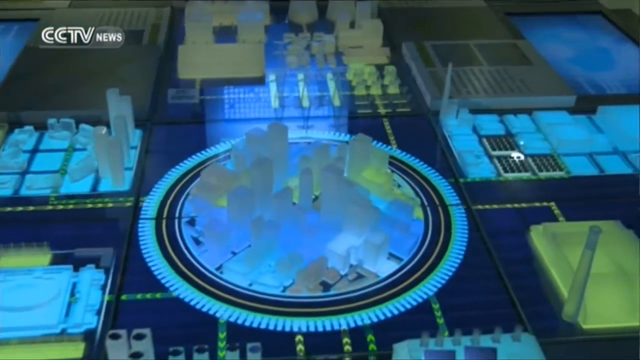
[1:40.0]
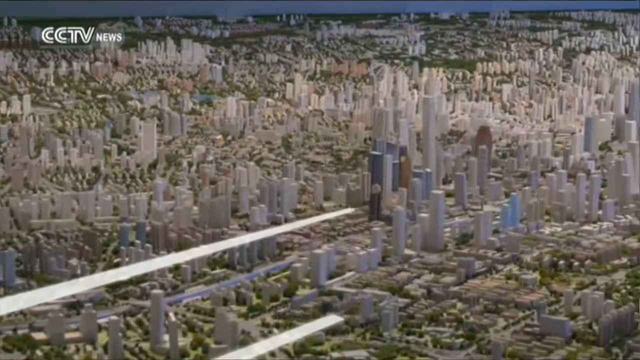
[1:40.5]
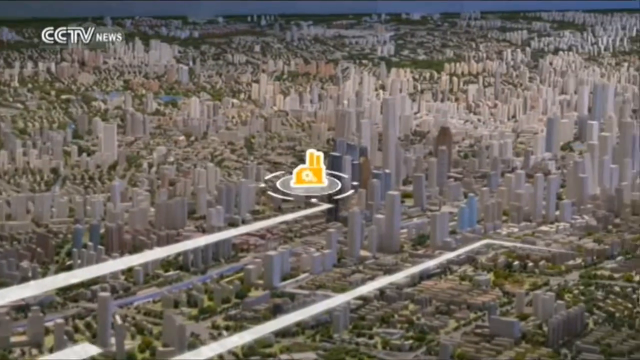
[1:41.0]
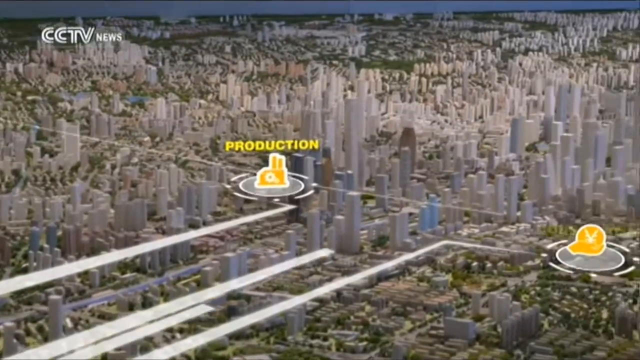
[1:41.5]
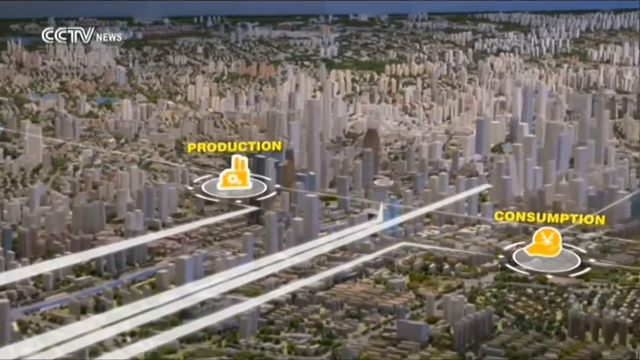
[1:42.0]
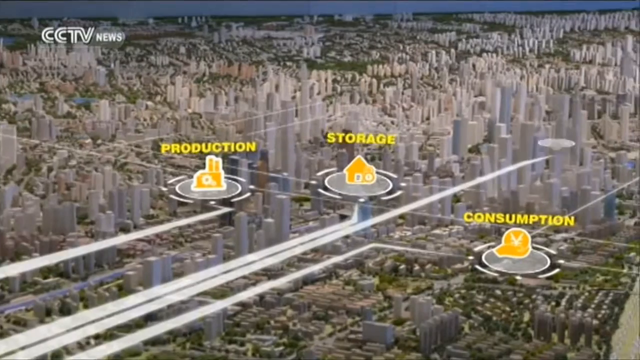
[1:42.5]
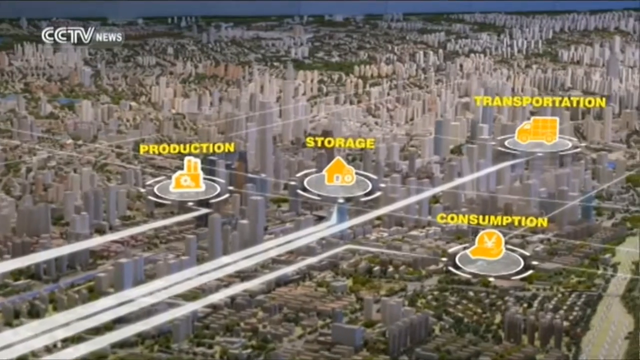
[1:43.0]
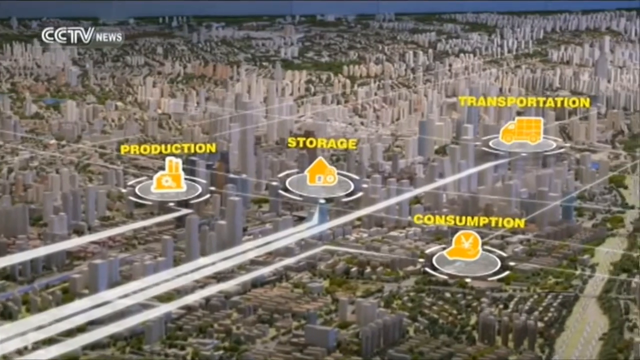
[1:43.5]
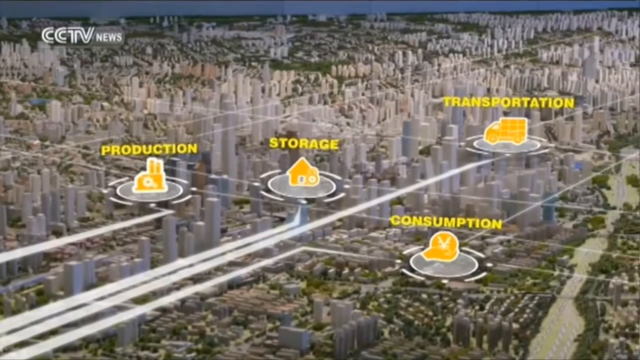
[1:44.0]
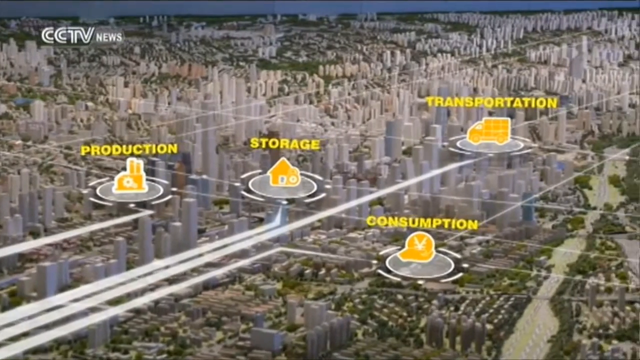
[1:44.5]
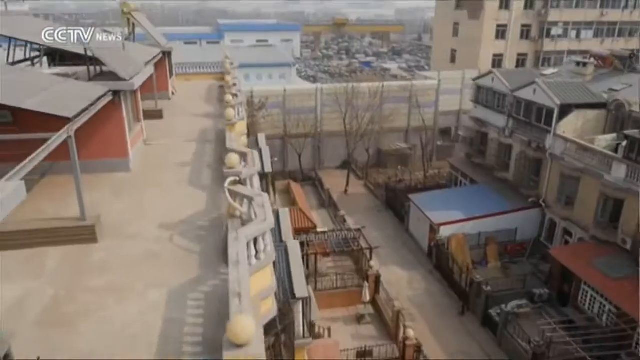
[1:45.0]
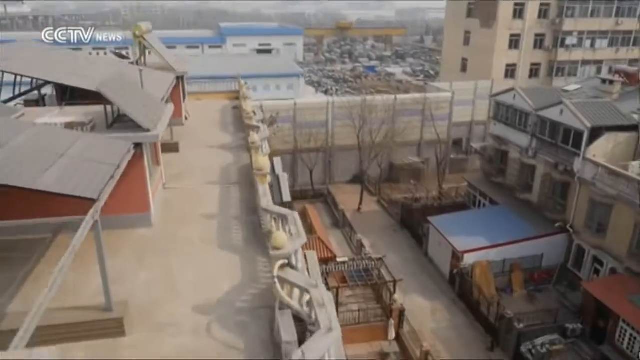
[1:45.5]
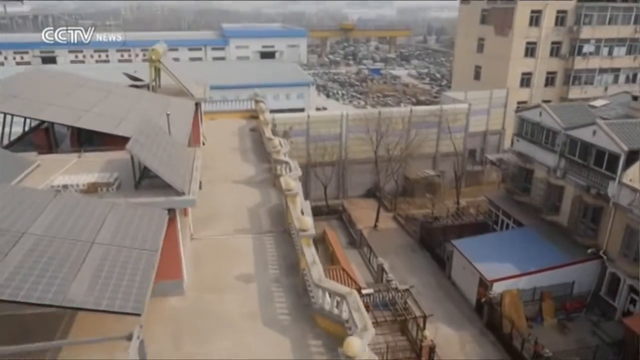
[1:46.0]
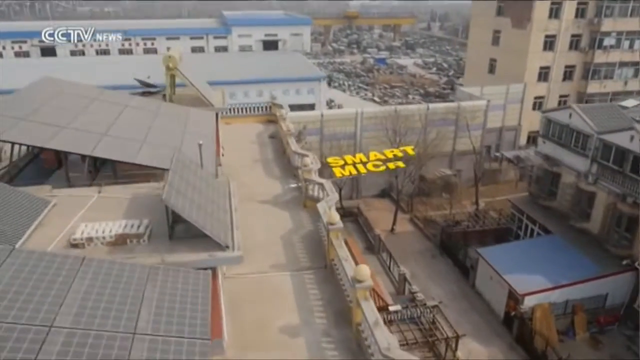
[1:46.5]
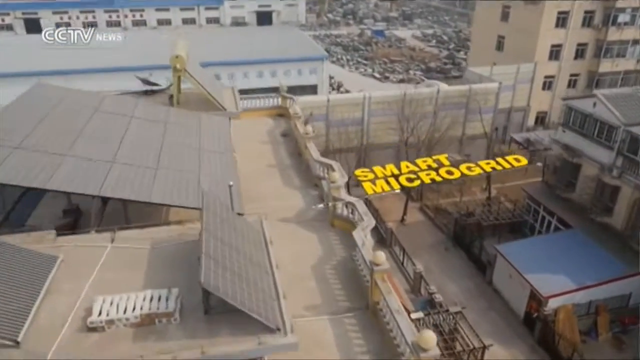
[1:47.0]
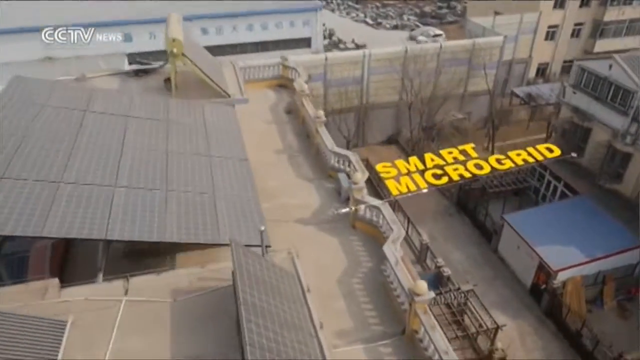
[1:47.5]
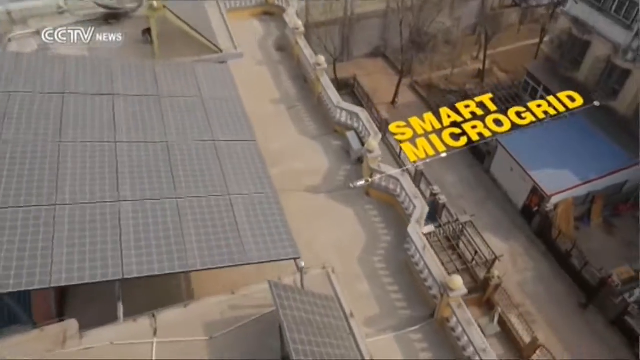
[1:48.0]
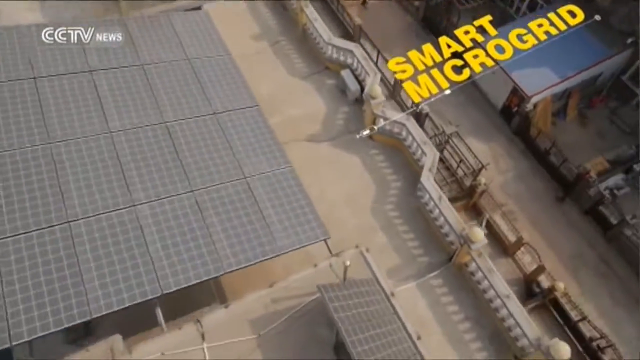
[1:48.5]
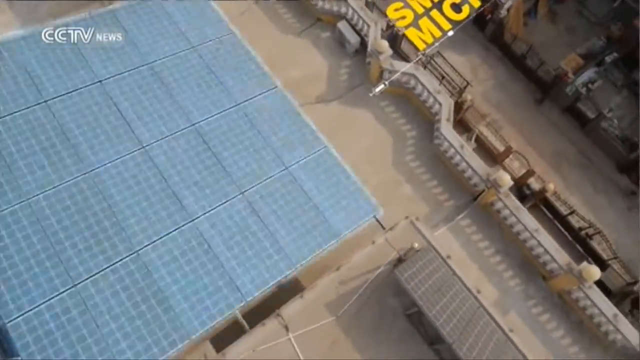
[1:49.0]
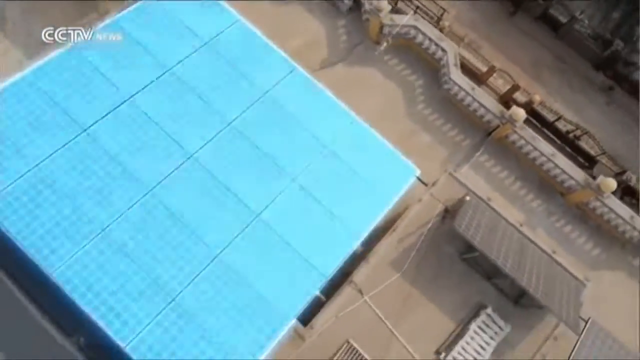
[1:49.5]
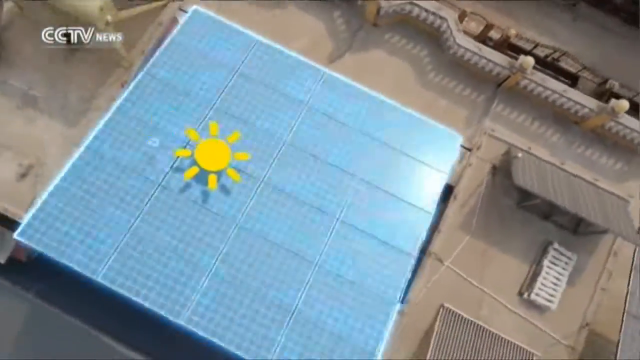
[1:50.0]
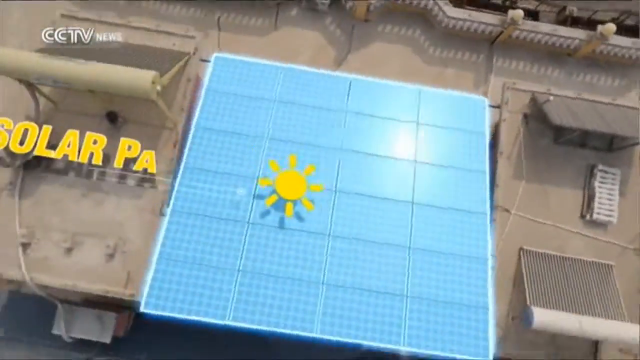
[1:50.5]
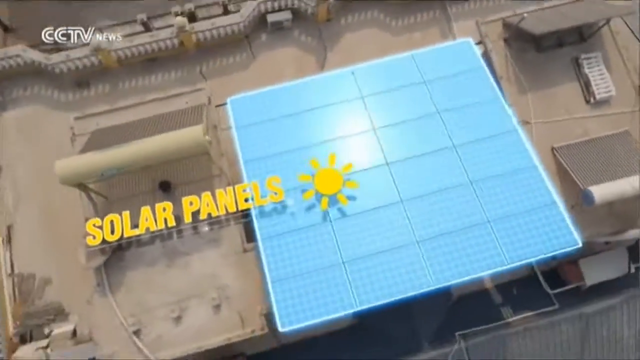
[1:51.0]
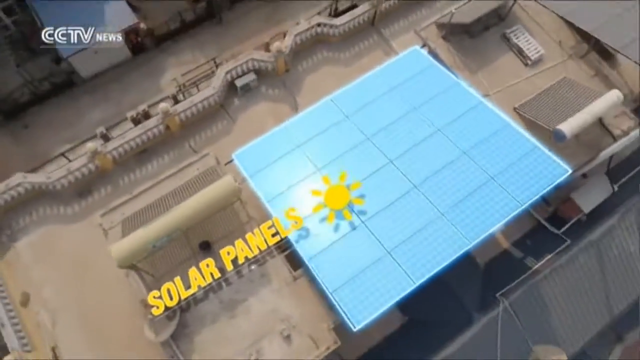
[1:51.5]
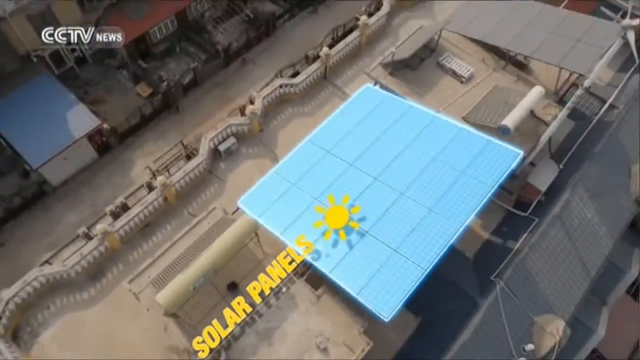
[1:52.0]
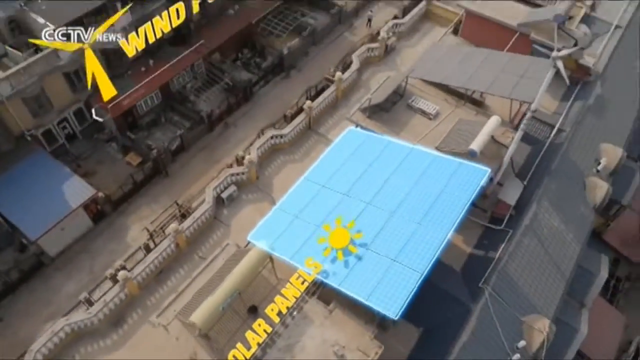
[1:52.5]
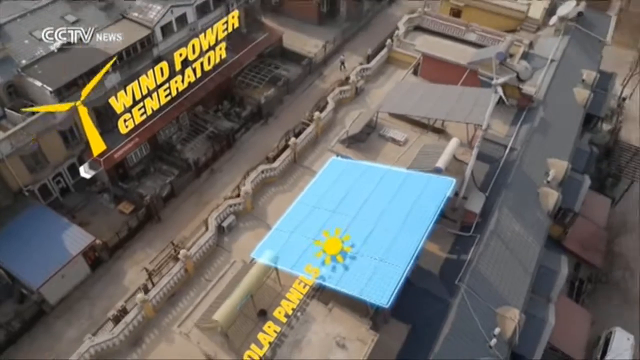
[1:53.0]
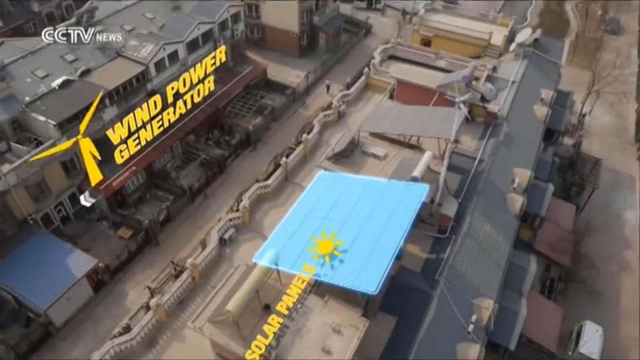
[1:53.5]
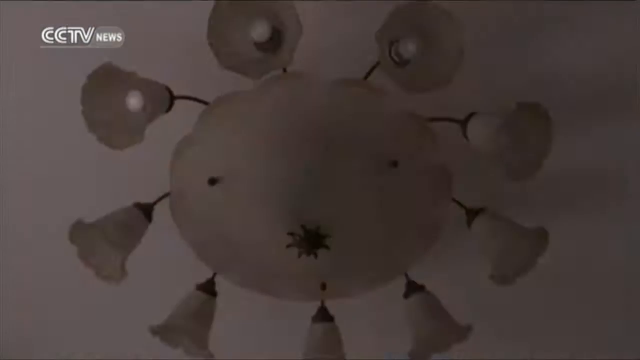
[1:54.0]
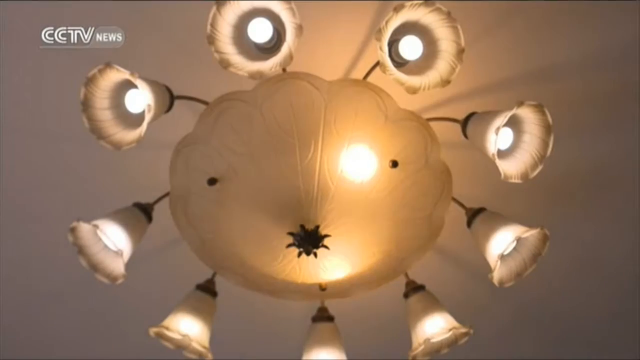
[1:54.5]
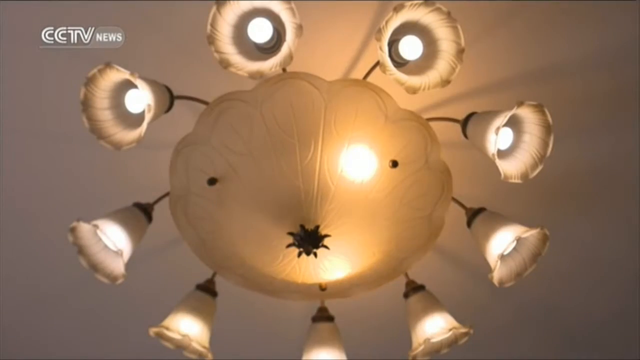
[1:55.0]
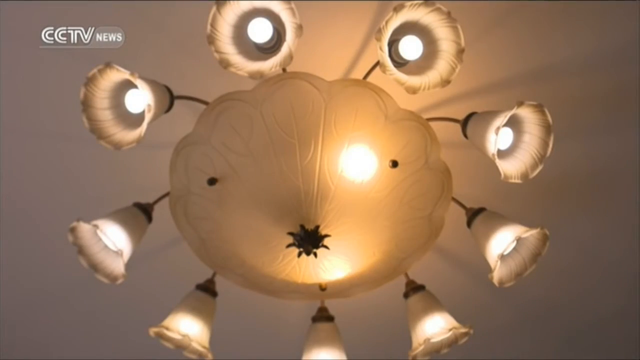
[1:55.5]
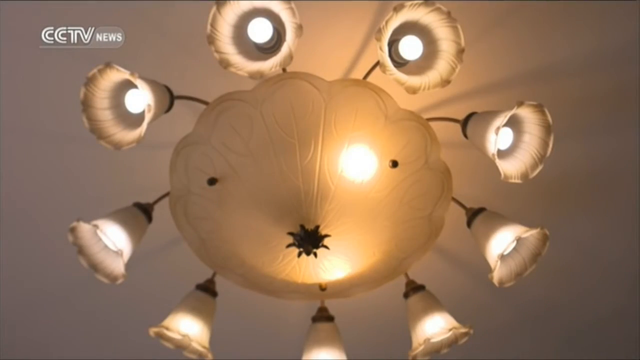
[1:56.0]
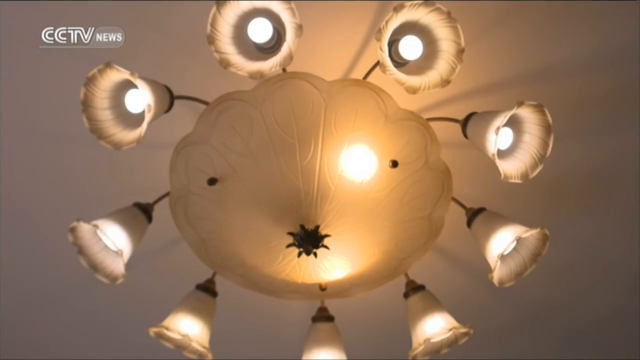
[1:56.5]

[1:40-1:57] The camera pans as yellow text reads "production, storage, transportation, and consumption," then "smart microgrid." Something like blue panels on a house appears, with "solar panels" in yellow and then "wind power generator." A lamp inside a home is shown, something like a flower lamp with visible petals. The screen returns to production and storage, with a close-up of the smart microgrid and the solar panels next to a picture of the sun. The lights in the house number approximately 10, with a main light in the middle; the lamp is lit, beige in color with white light bulbs. Tall structures are around, green grass is visible, and the blue sky shows it is daytime.